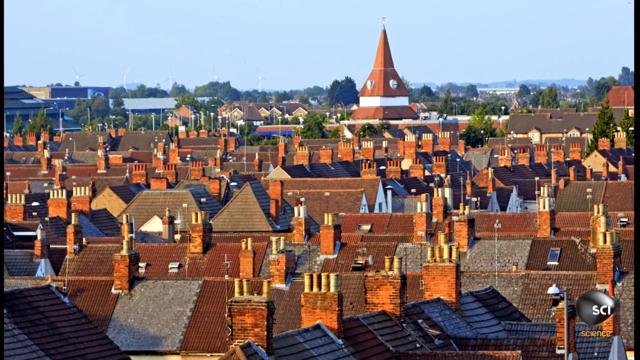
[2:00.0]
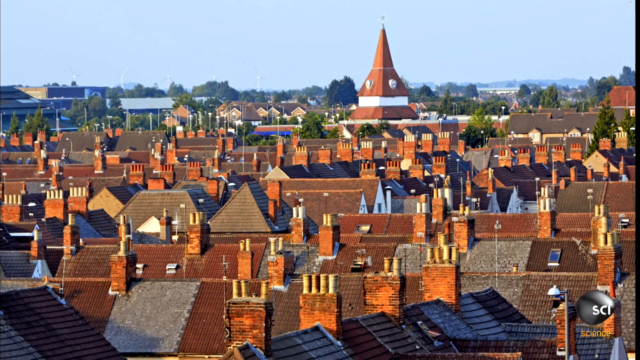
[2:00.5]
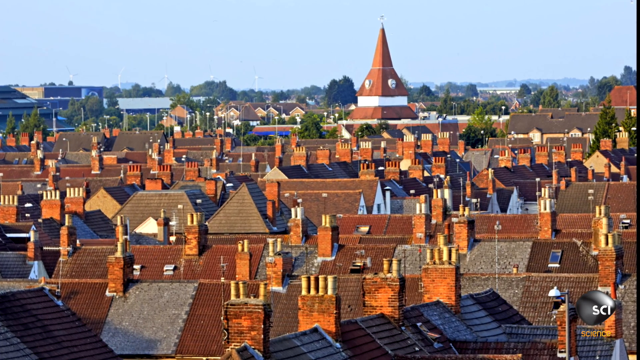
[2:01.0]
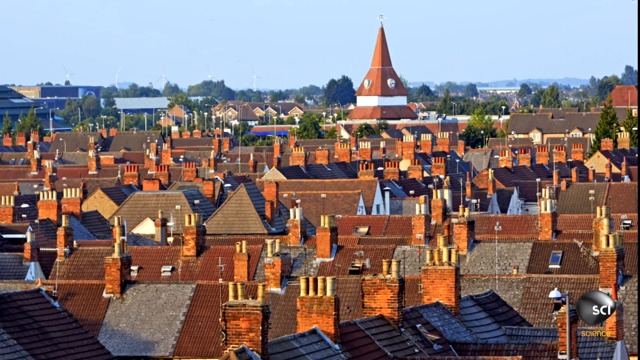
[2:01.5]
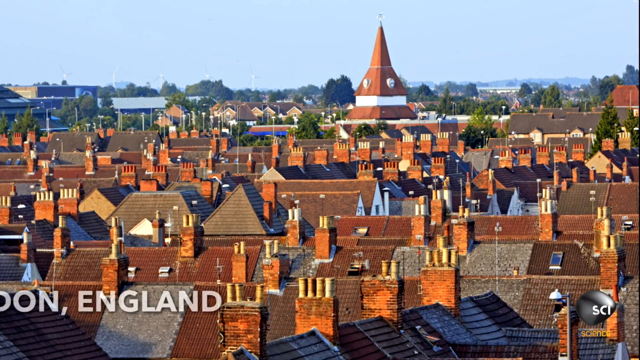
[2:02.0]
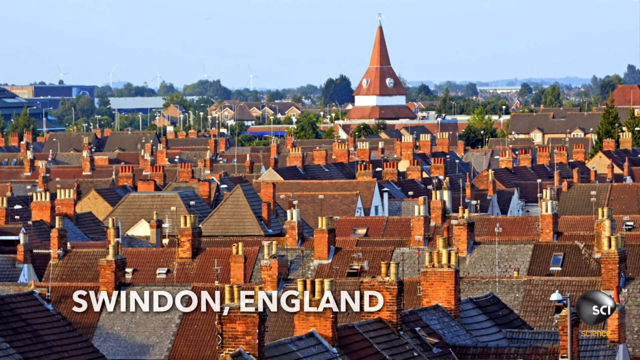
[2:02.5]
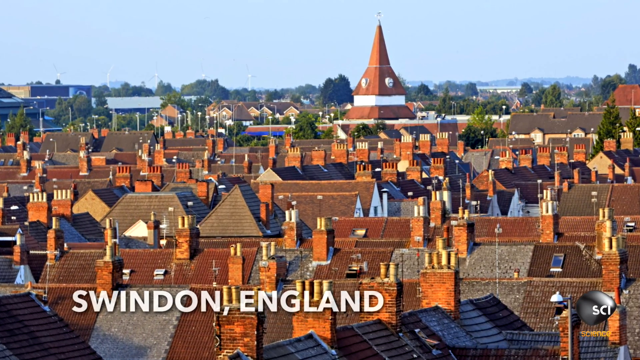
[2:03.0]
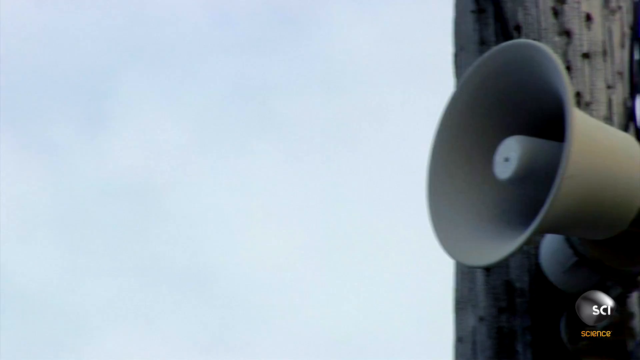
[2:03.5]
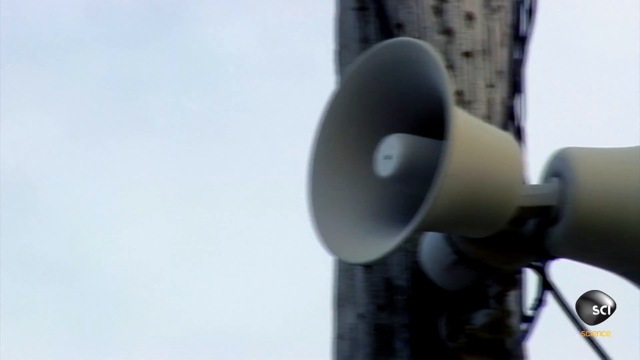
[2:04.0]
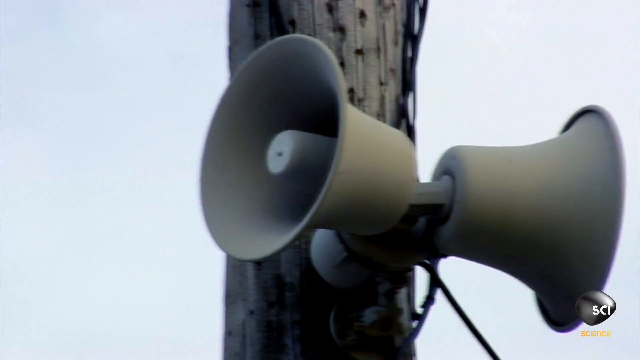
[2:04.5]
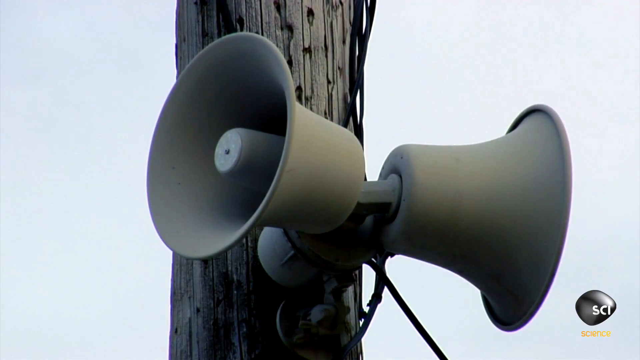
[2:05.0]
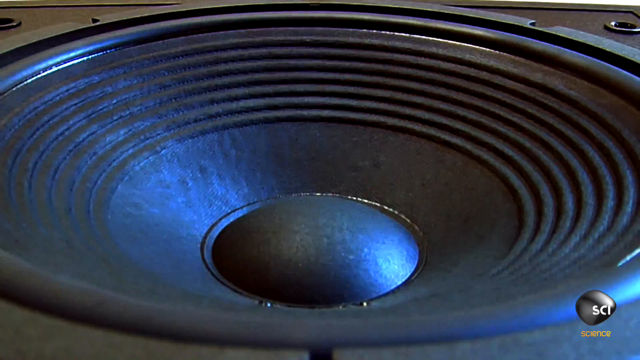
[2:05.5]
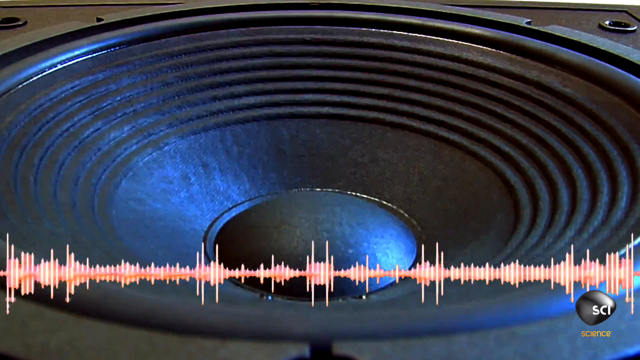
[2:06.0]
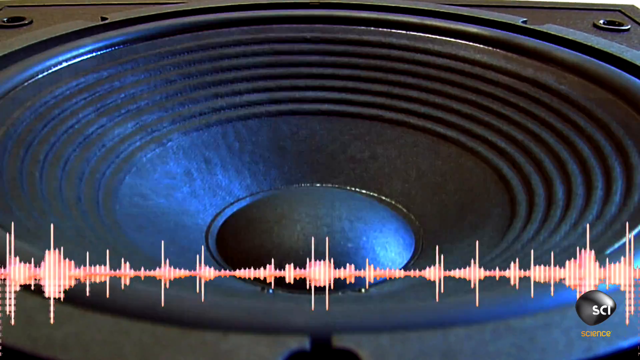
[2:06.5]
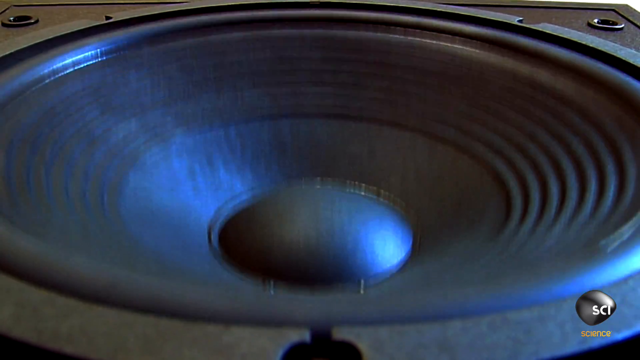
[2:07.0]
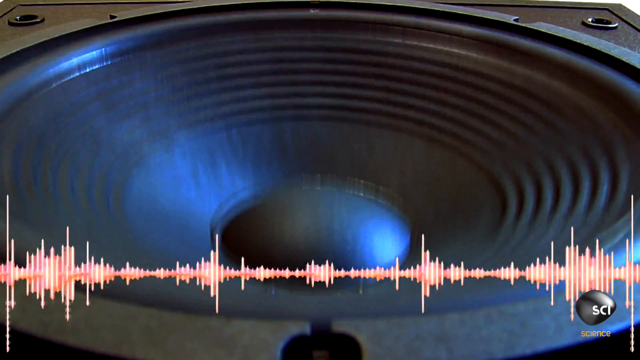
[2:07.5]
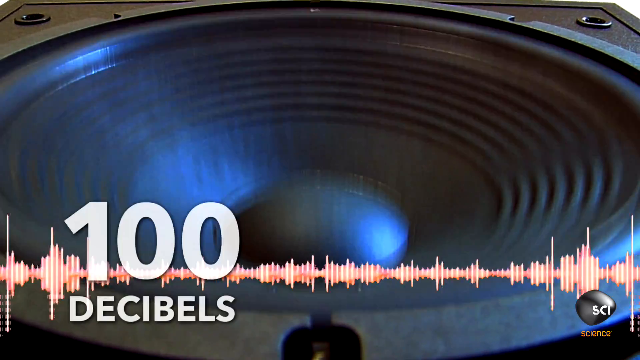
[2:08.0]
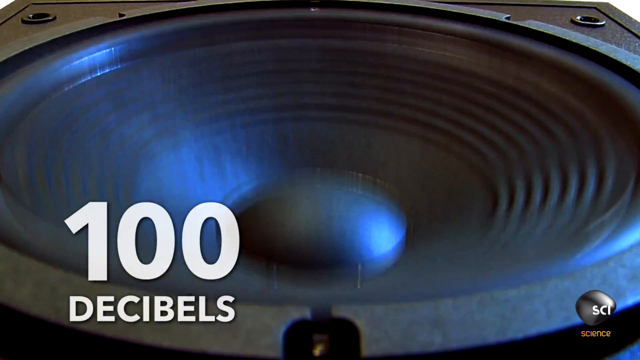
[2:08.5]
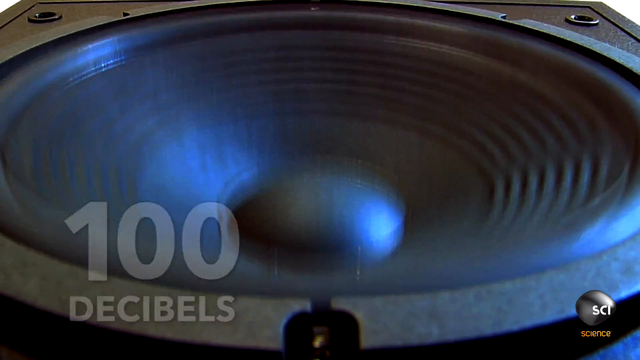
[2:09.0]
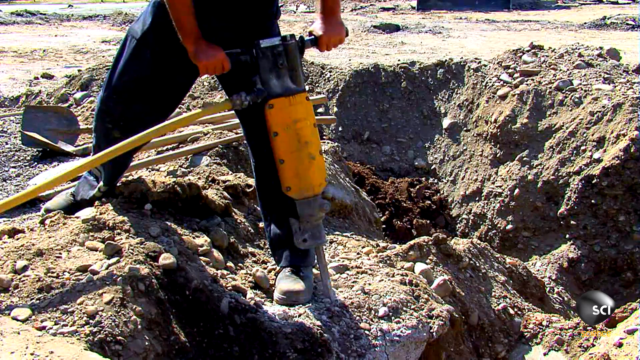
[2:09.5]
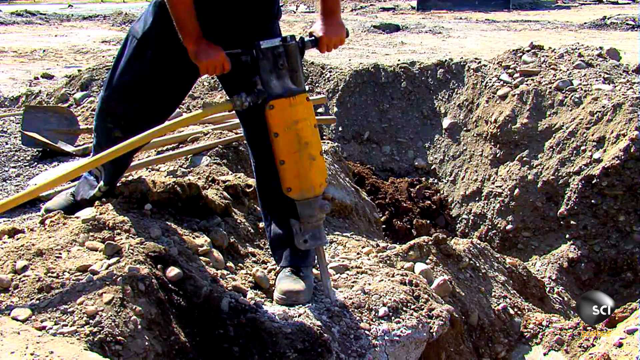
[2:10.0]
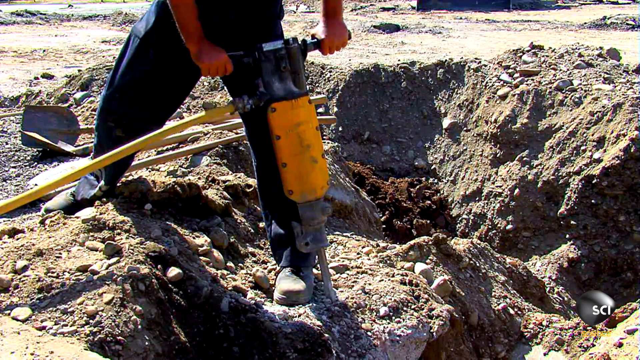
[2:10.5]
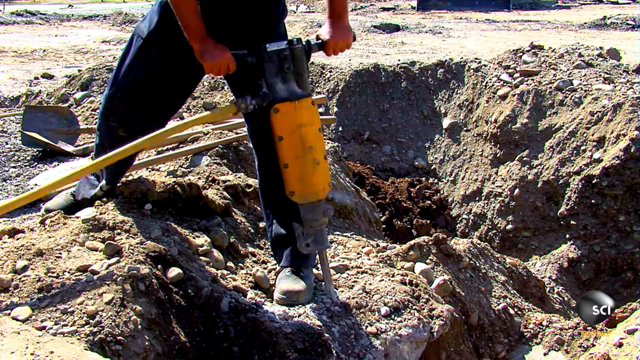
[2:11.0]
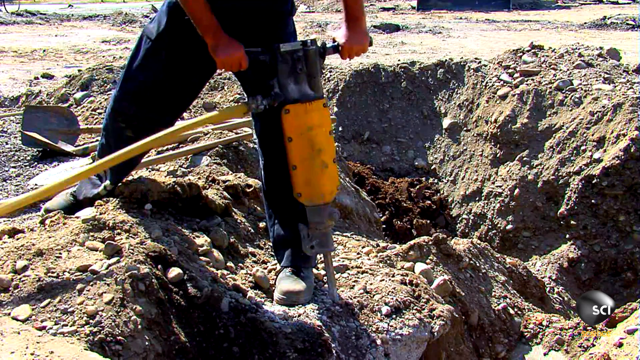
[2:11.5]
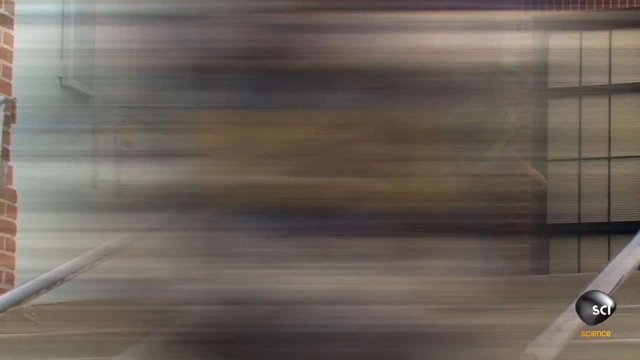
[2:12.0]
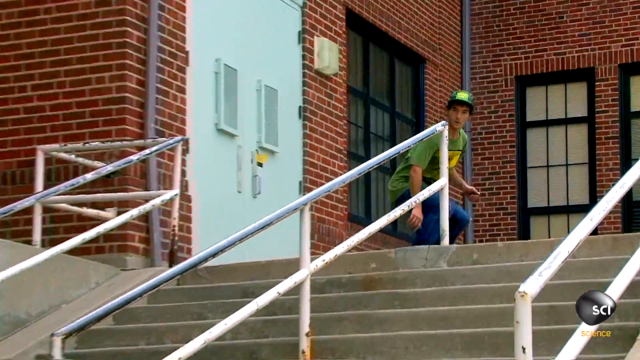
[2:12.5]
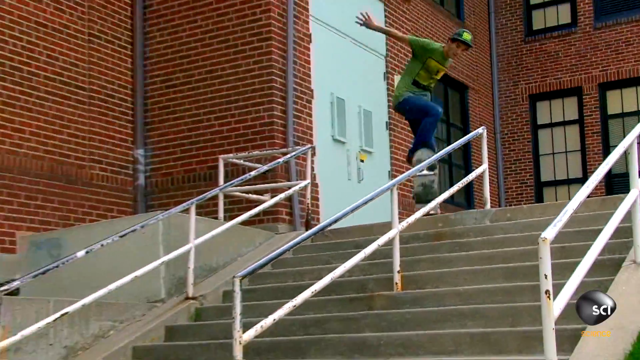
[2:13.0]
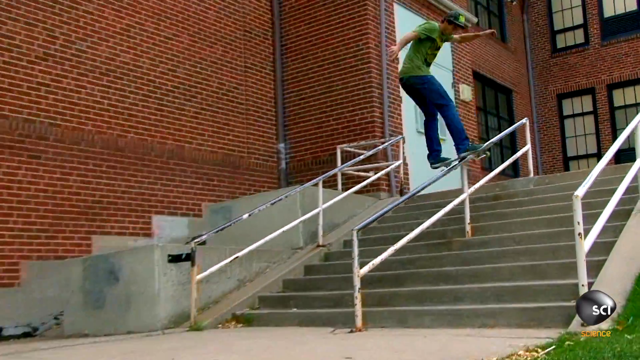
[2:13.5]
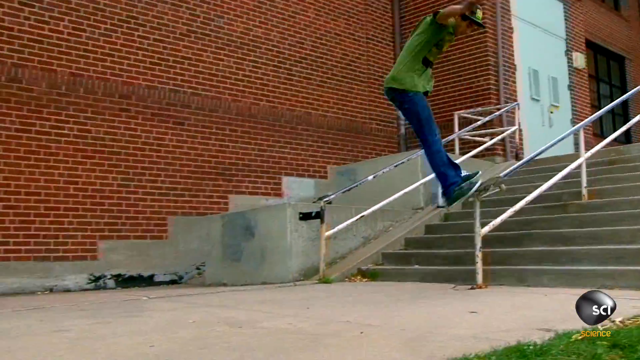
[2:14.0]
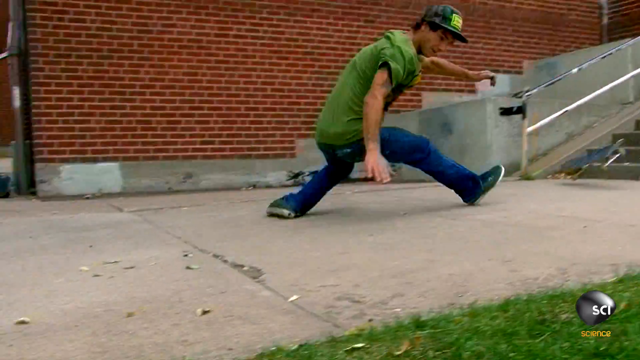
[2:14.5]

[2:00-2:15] The cityscape of roofs appears with the text "Swindon, England." Two speakers are attached to a fence post outside, then a vibrating black speaker appears with the text "100 decibels," and a red sound bar comes up and vibrates like a wave. A jackhammer follows, then a boy in a green shirt skateboards down a railing along a staircase and falls backwards onto his back at the end.